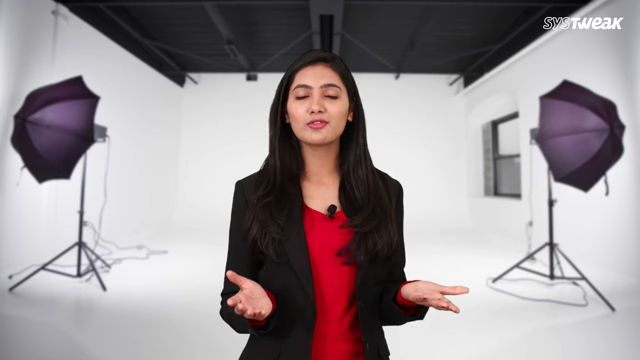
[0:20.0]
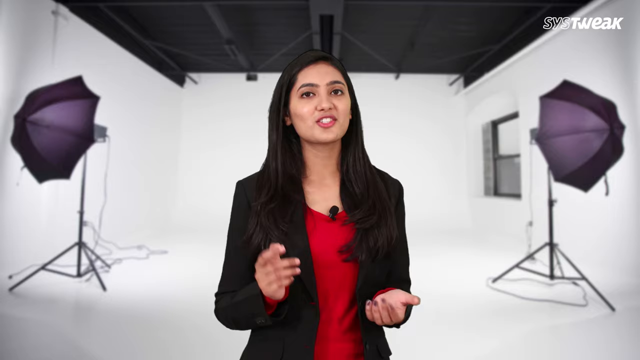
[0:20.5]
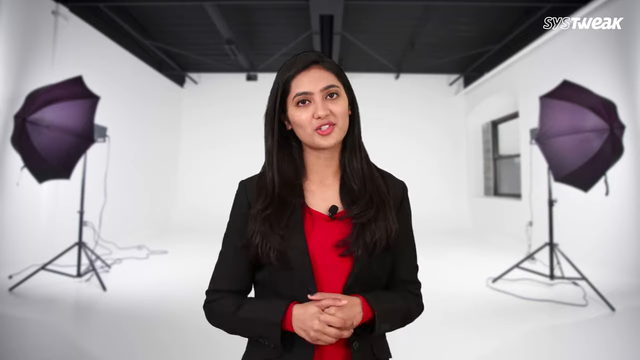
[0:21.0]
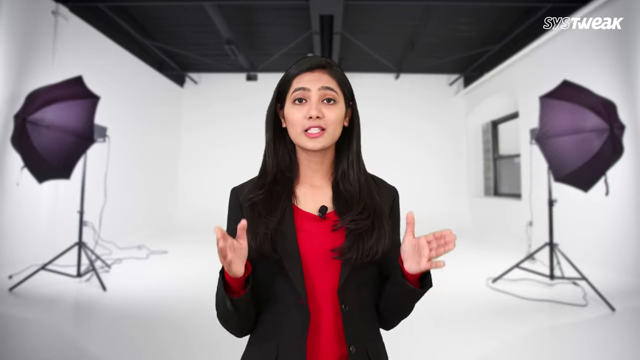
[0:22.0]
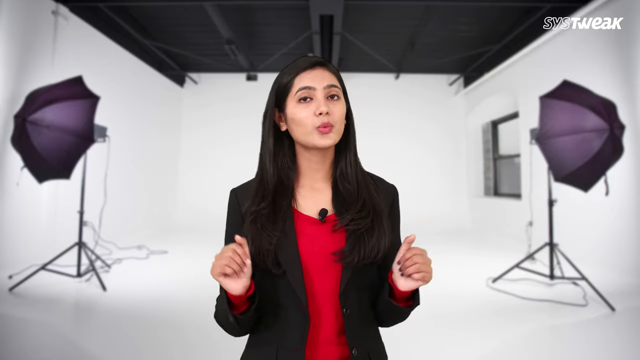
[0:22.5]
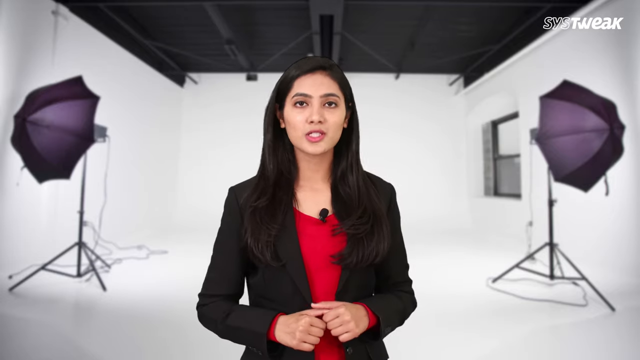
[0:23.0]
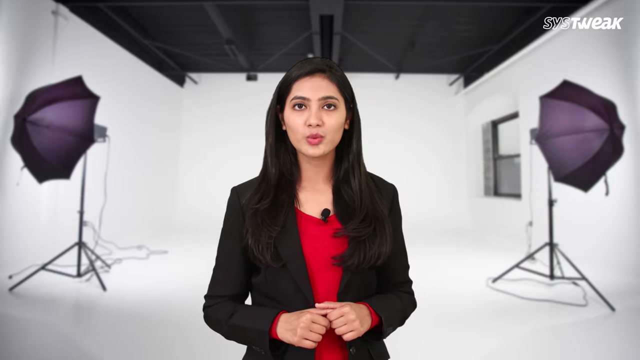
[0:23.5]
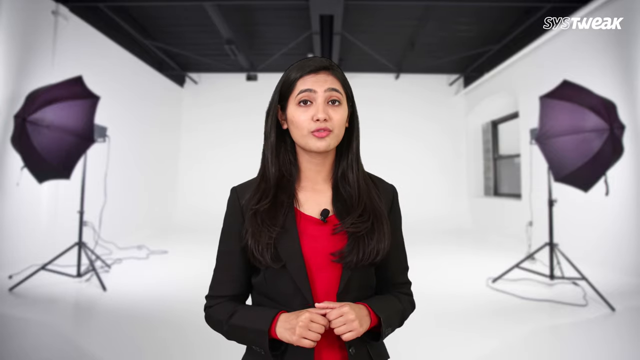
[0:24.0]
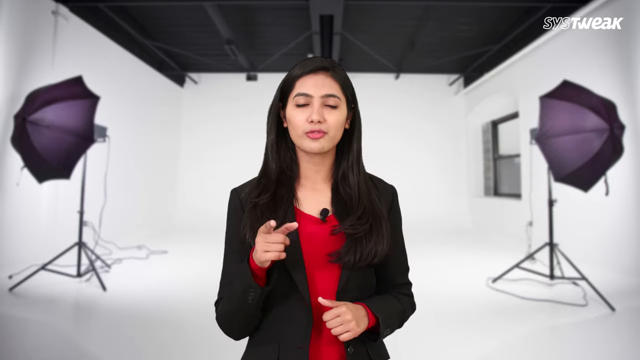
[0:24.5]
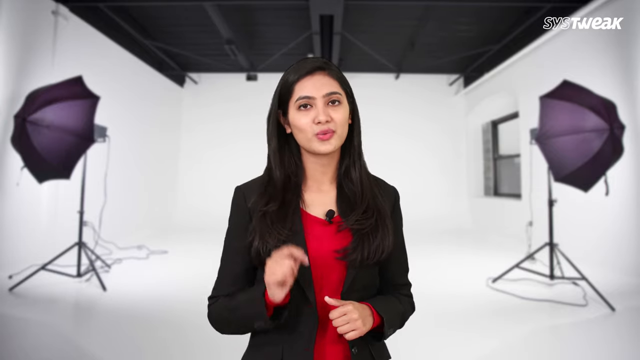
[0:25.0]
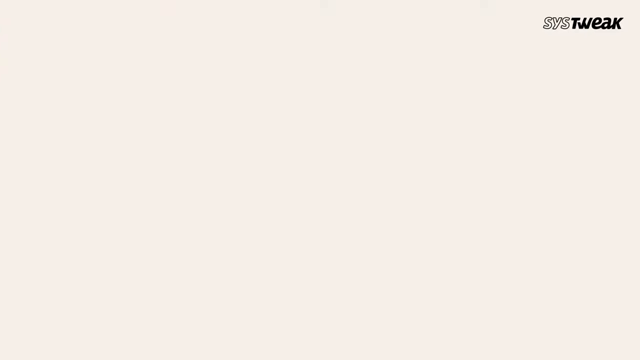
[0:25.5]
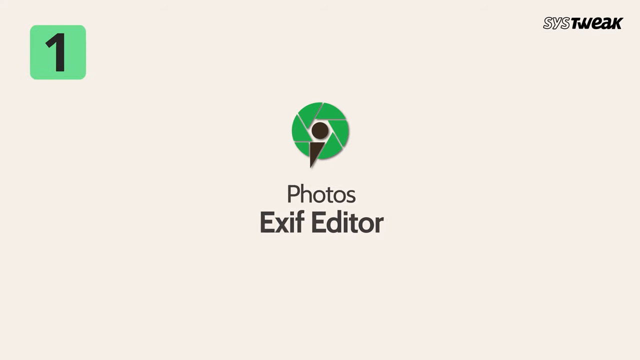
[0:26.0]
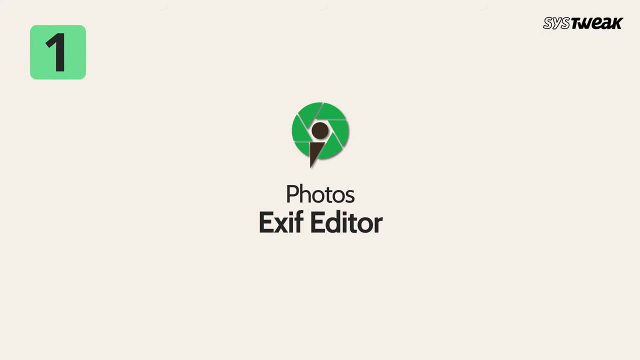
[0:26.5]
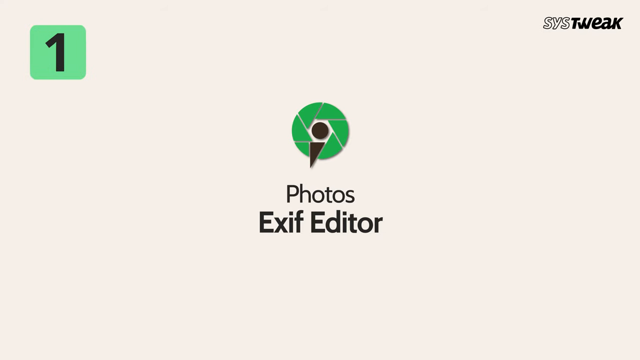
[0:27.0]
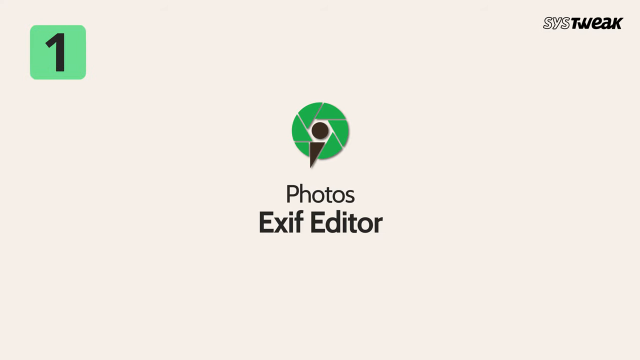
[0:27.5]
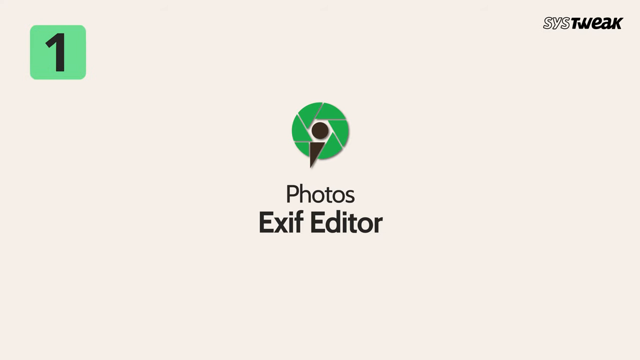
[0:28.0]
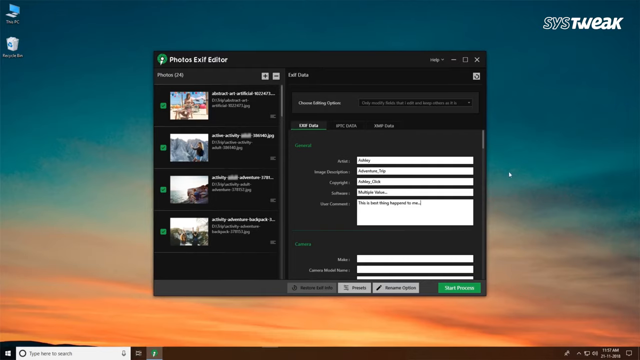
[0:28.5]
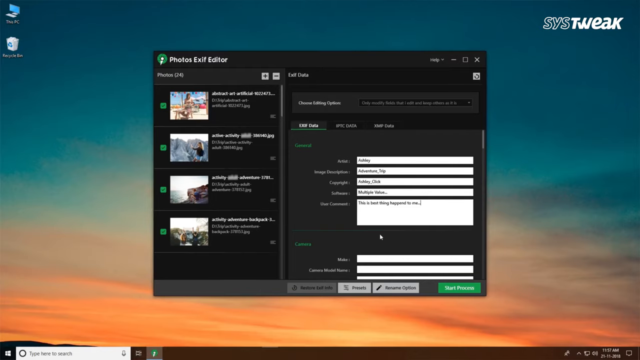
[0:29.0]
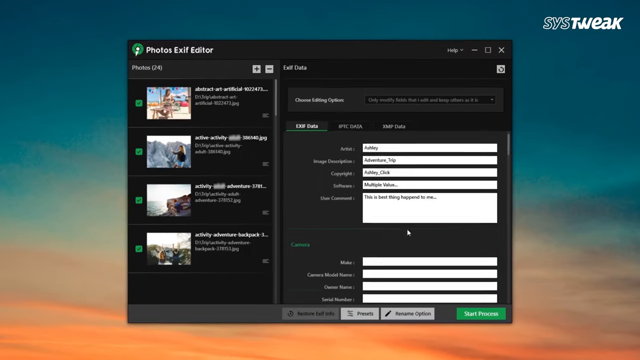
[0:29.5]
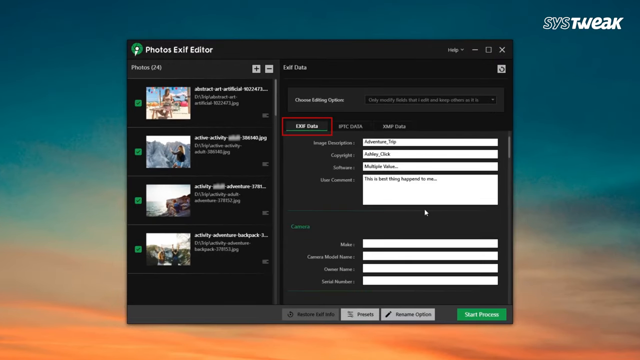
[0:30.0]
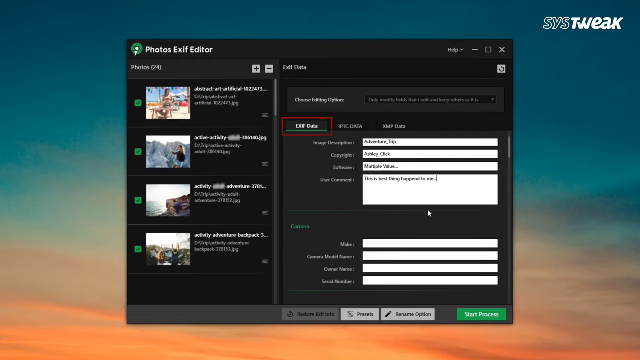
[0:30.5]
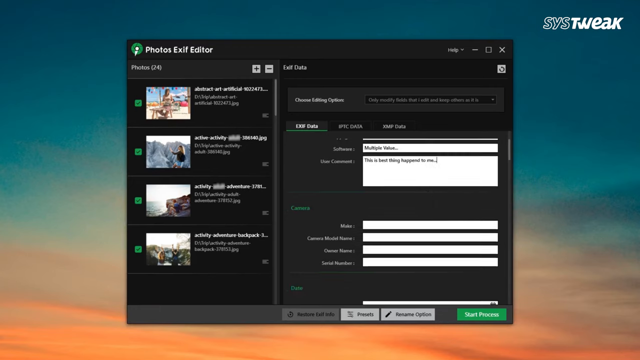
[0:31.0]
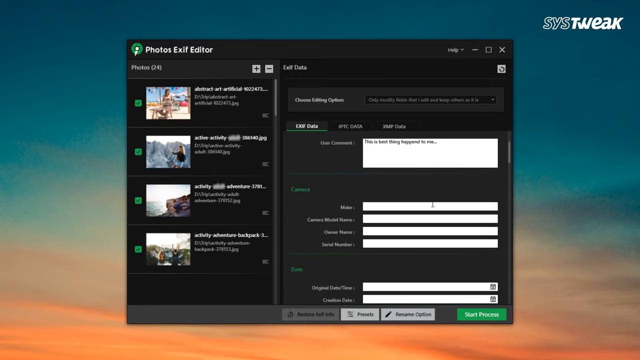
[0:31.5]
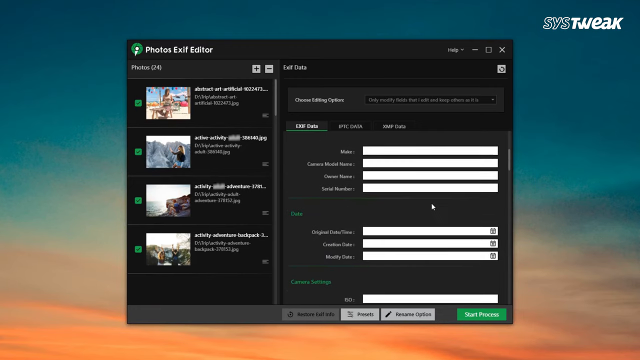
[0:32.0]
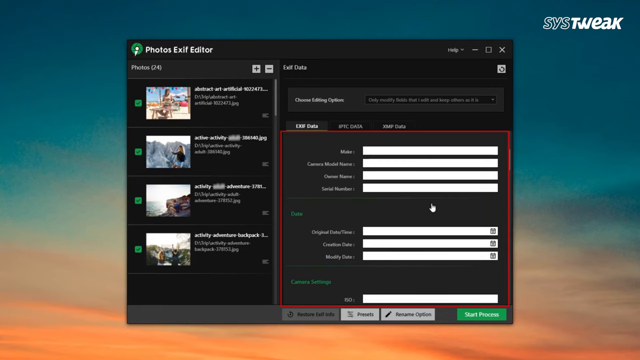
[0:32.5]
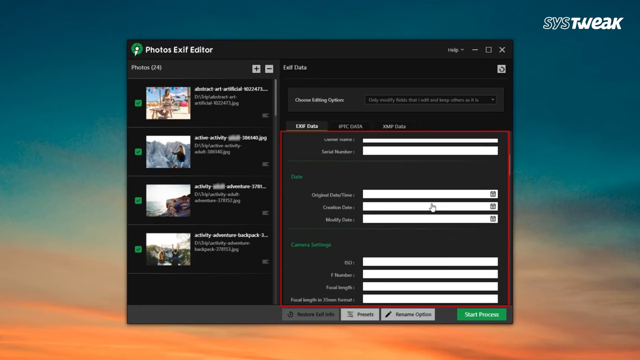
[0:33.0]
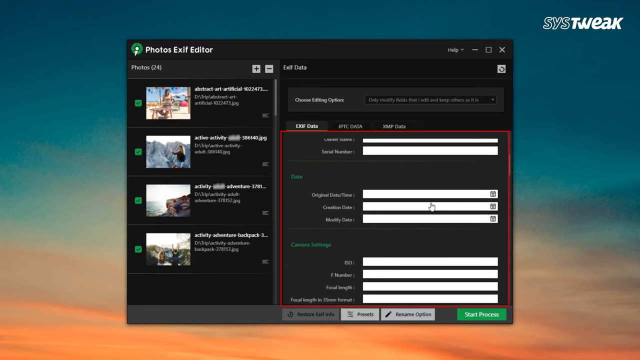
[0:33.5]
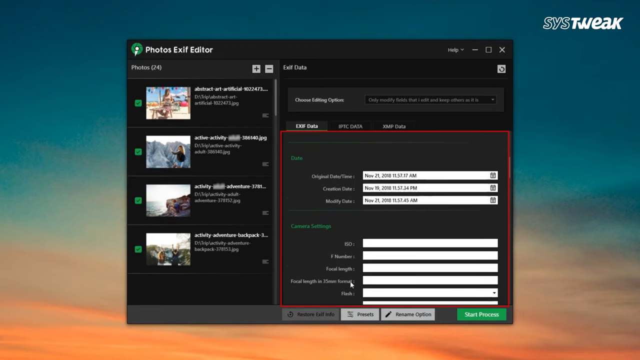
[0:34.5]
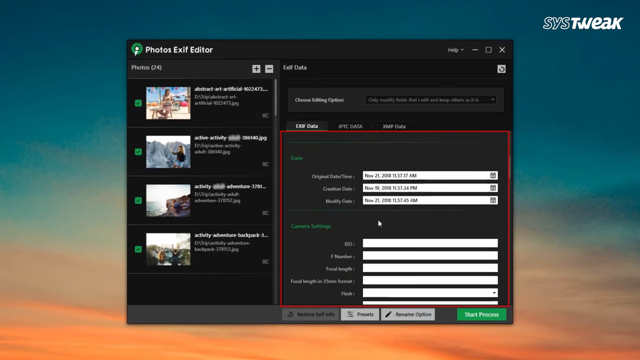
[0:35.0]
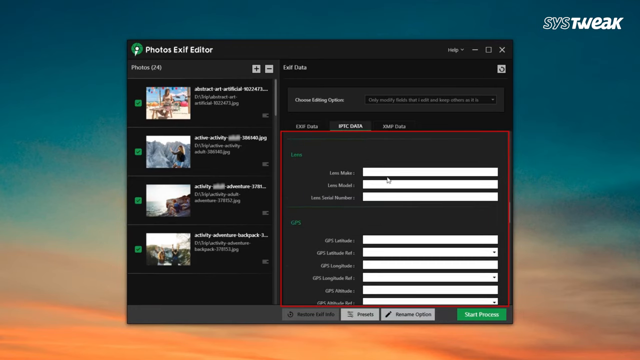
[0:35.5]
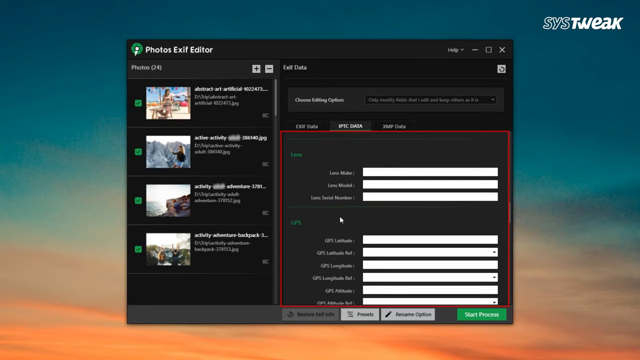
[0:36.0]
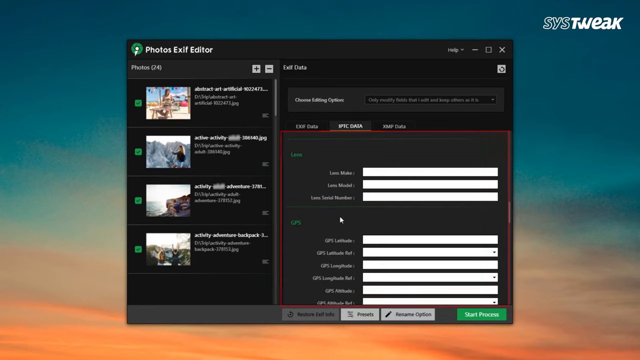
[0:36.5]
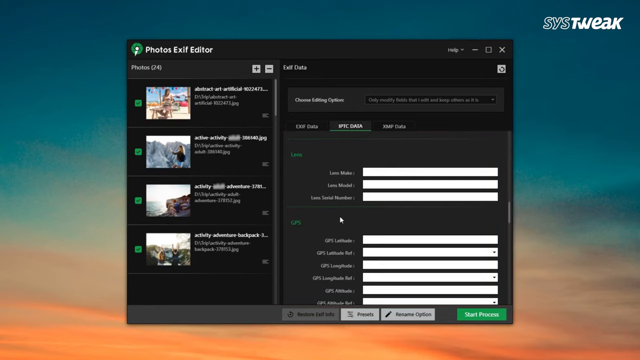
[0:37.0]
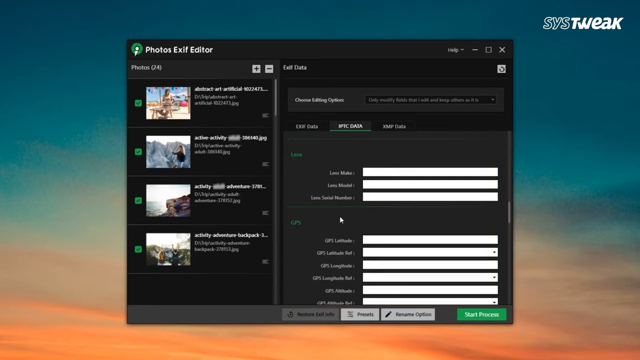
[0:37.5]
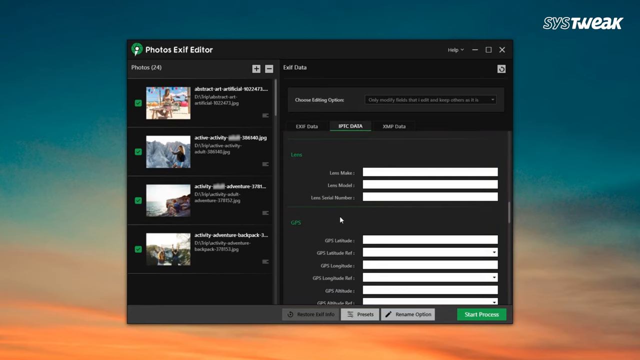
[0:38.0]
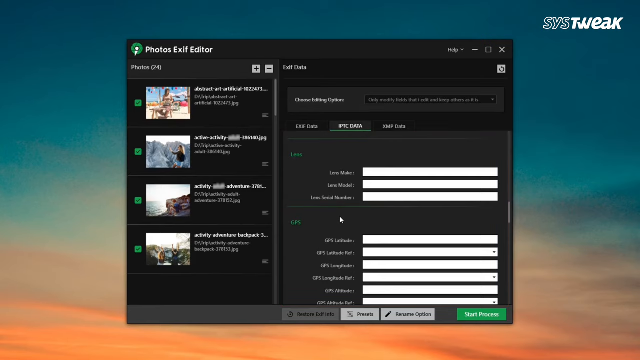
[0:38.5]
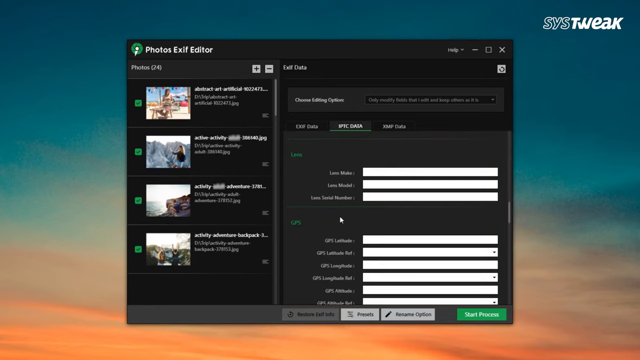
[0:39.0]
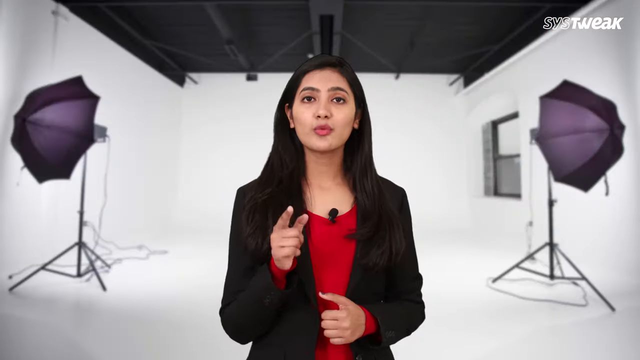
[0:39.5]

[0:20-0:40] The woman speaks into the camera with her hands interlocked in front of her. She uses her hands to emphasize a point and briefly points at the camera. A graphic follows, with a black number one on a green background in the top left corner and the words "photos exif editor" in the middle. Next comes a shot of someone's desktop with a photo editor in the middle of the screen, showing photos to the left with some captions and descriptions, and a box with details. The software appears to be Photos Exif Editor. Someone uses a cursor to scroll through the details, which are highlighted in red on the screen. At the end, the woman in the black and red outfit is shown speaking into the camera once more.